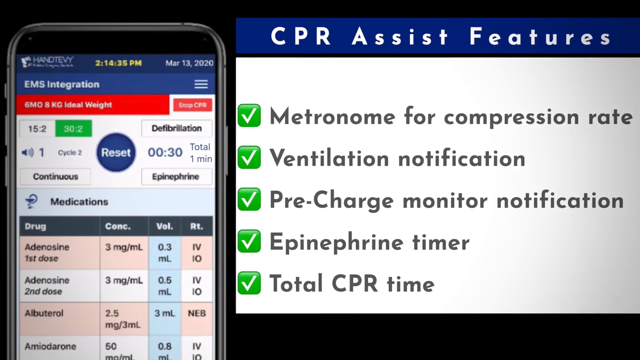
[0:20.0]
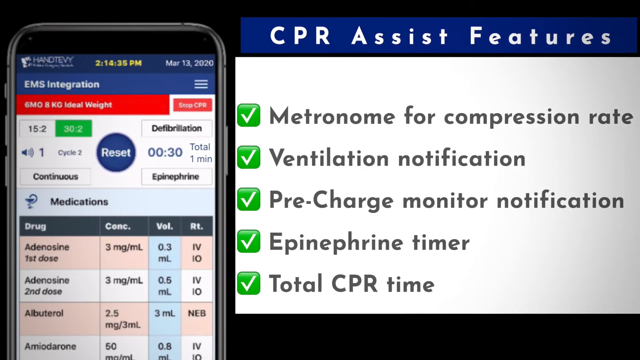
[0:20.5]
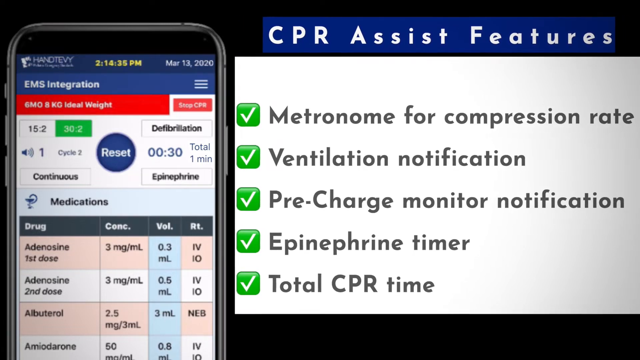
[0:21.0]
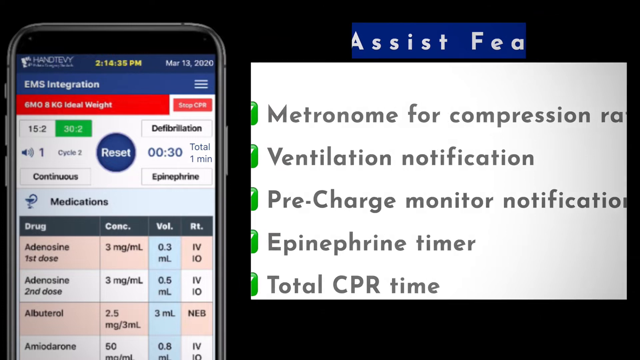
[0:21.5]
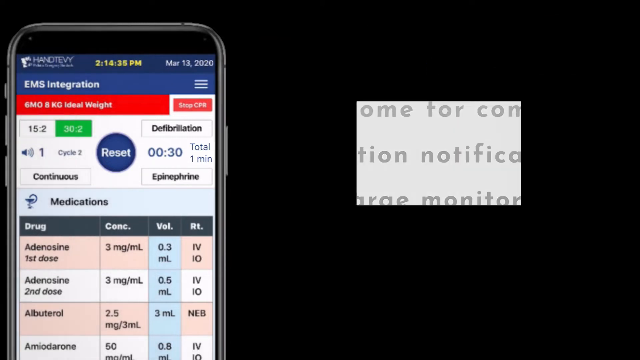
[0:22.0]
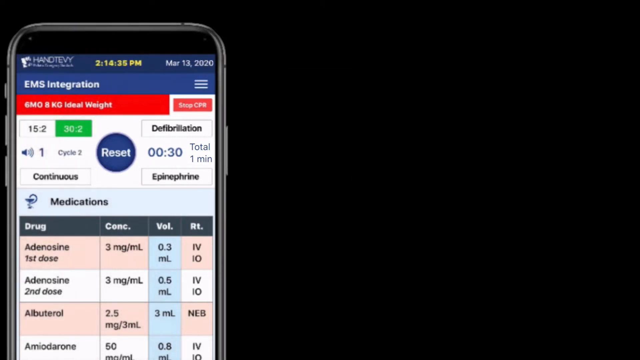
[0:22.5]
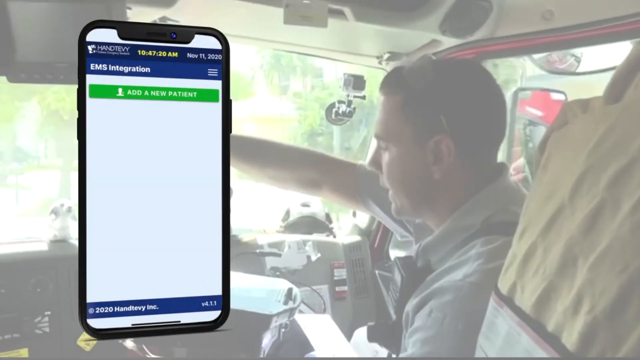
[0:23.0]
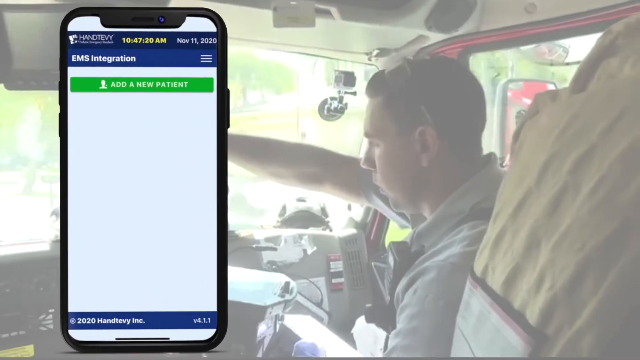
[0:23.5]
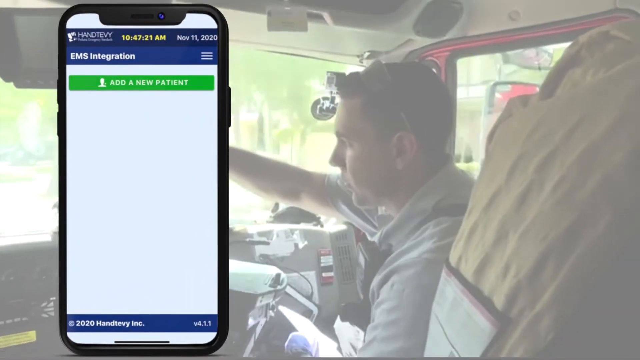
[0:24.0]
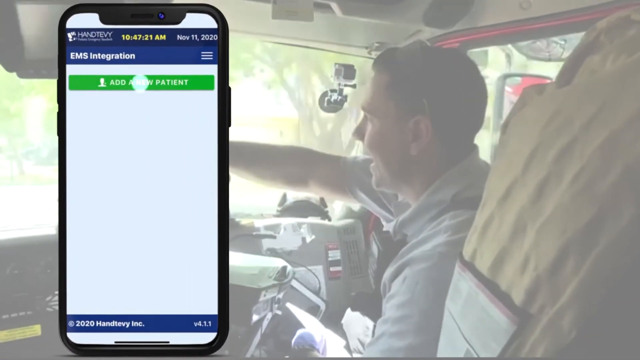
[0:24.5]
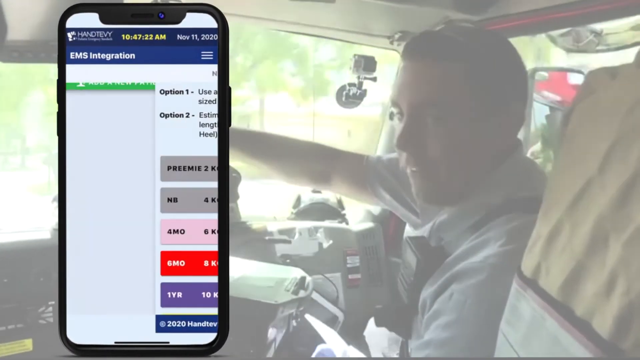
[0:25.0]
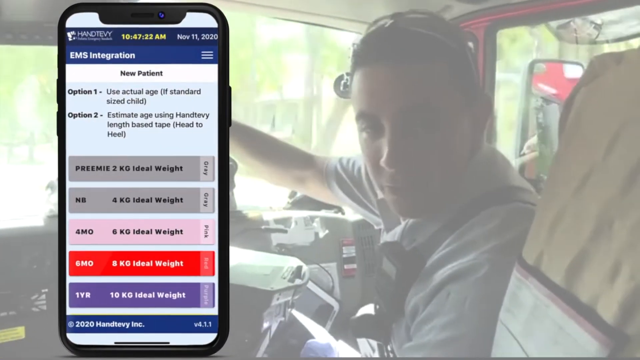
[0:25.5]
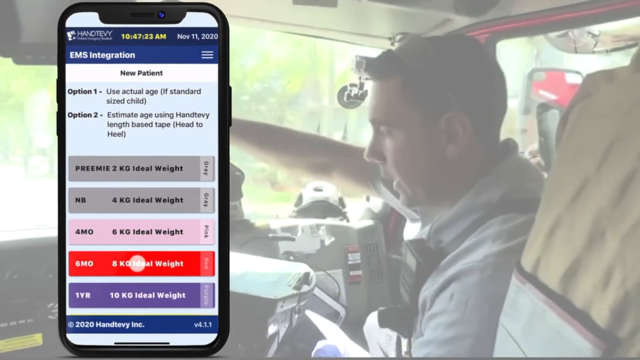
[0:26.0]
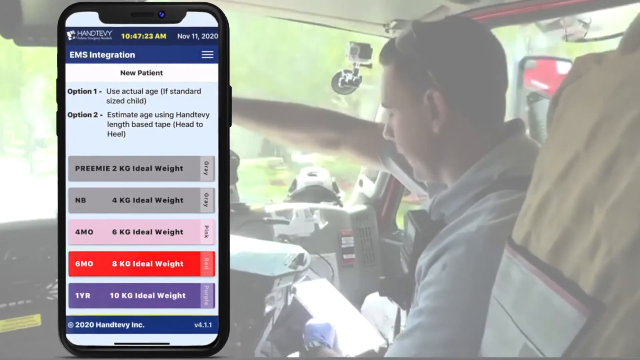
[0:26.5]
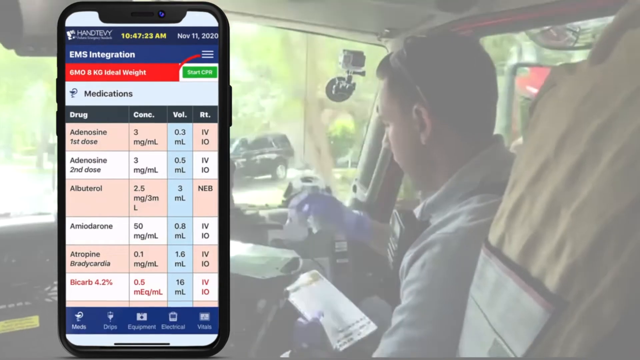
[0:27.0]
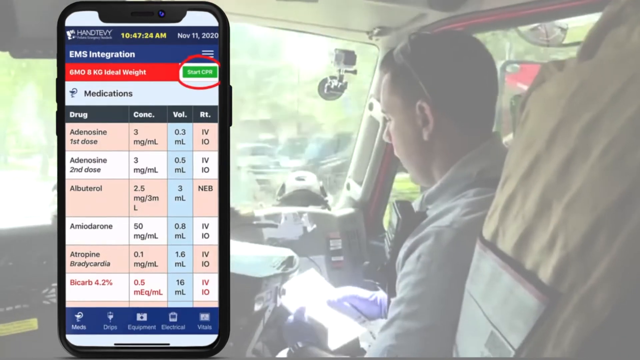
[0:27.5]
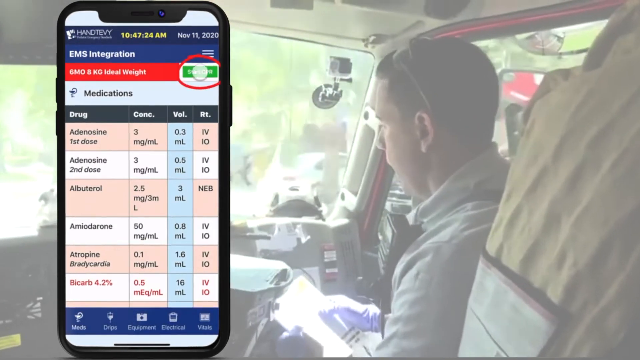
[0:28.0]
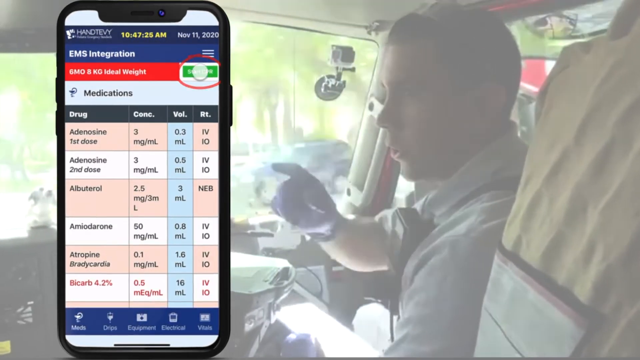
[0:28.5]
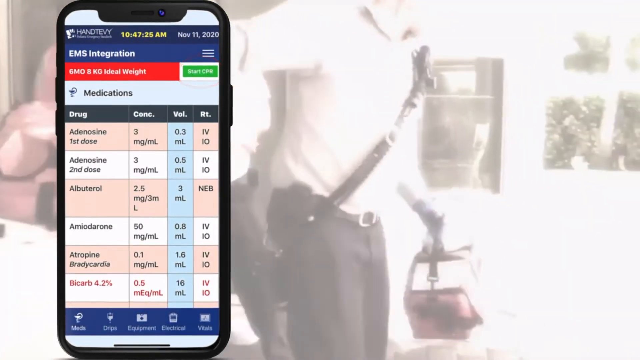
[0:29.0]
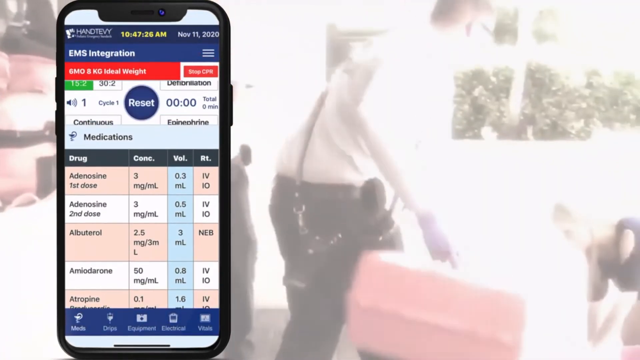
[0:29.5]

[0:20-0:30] A close-up of an iPhone screen appears on the left, showing an app called Handtevy EMS Integration. On the right, a text box lists the features of the CPR Assist: "Metronome for compression rate," "Ventilation notification," "Pre-Charge monitor notification," "Epinephrine timer," and "Total CPR time." This changes to a video of an EMS worker in the front of an ambulance, with a slight white haze over it. On the left of the screen is the iPhone, where the app is being used to add a new patient.